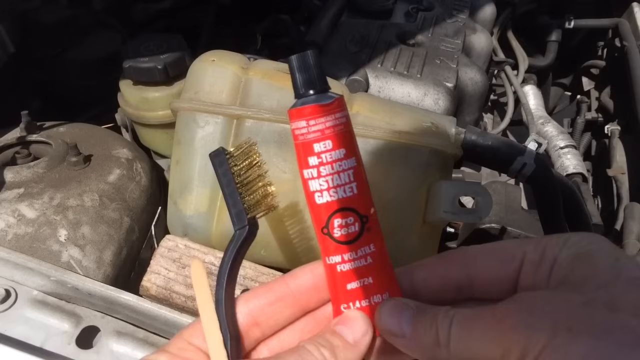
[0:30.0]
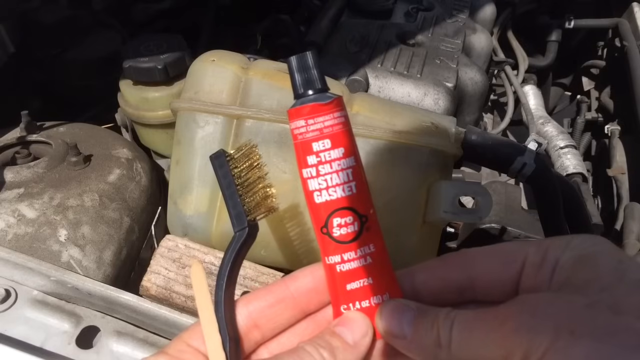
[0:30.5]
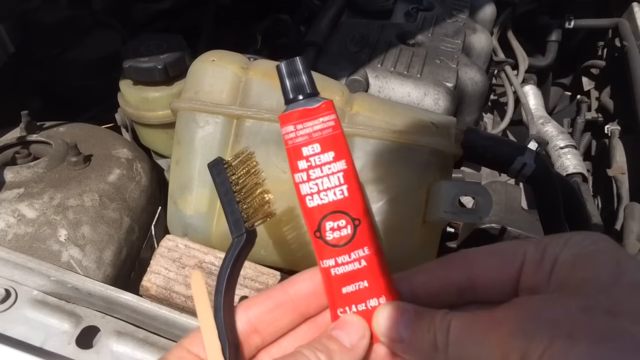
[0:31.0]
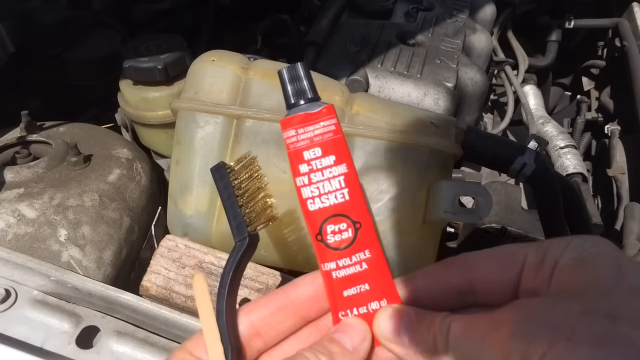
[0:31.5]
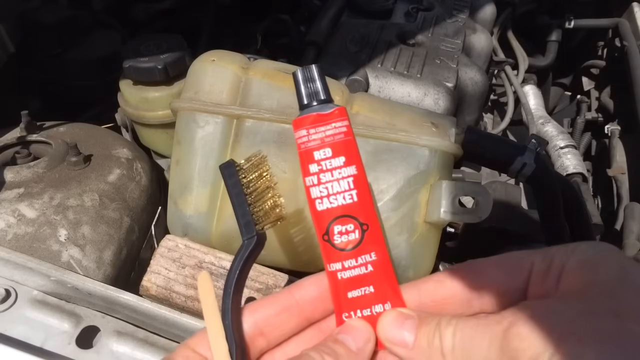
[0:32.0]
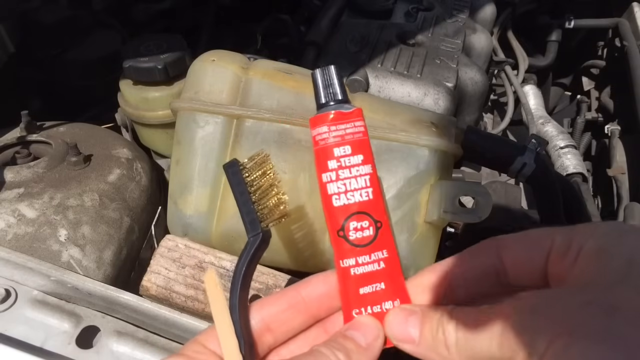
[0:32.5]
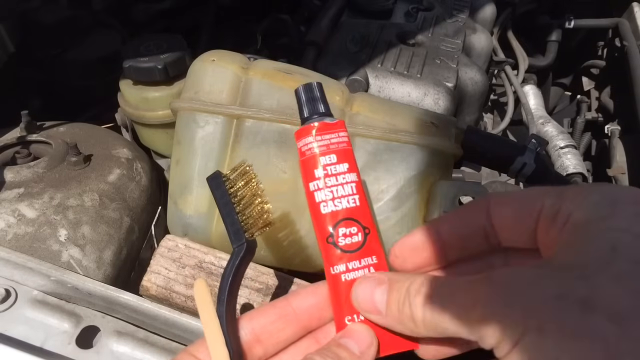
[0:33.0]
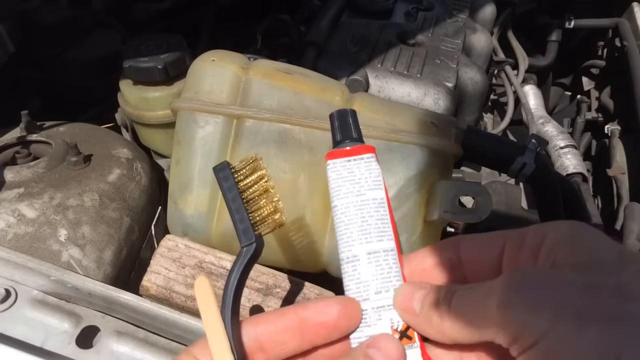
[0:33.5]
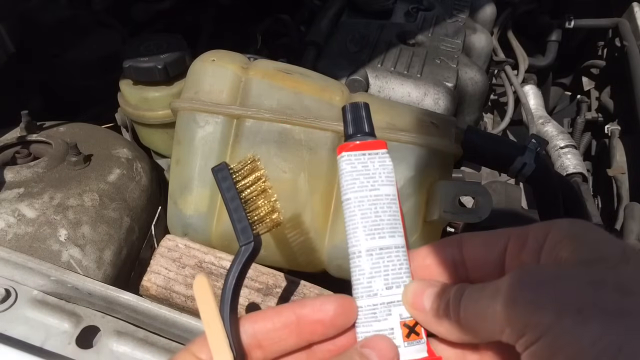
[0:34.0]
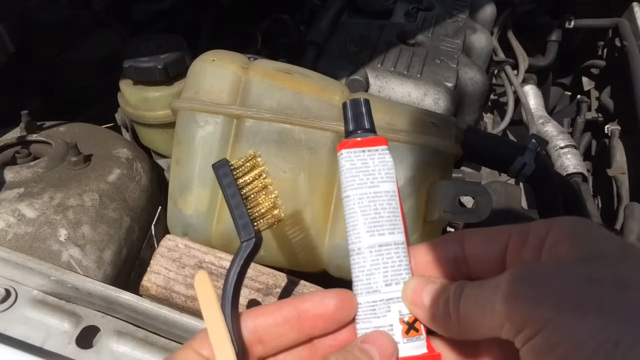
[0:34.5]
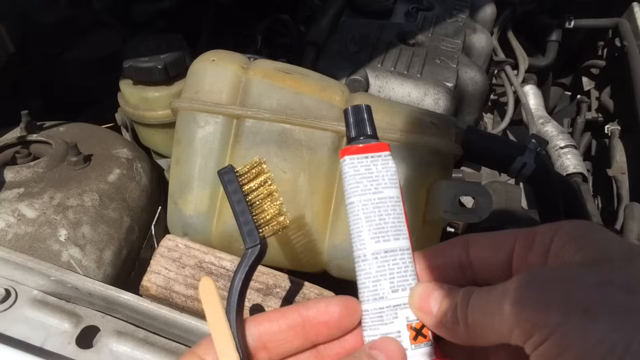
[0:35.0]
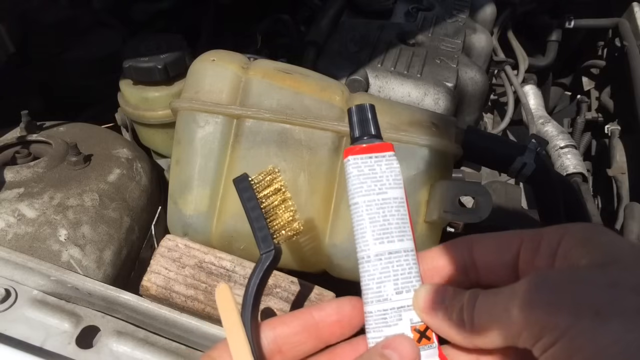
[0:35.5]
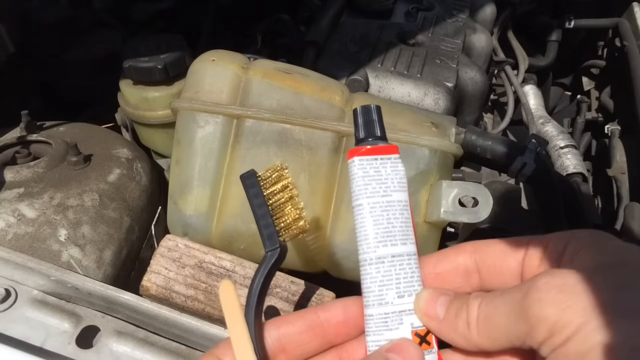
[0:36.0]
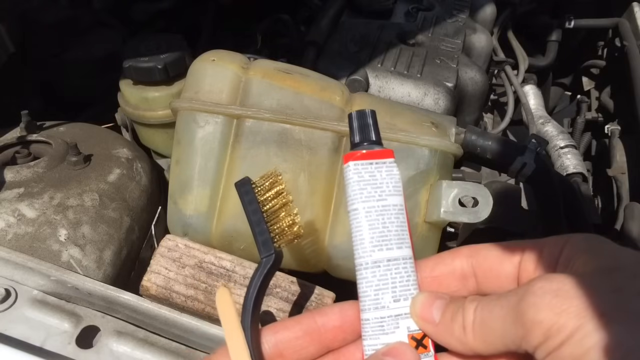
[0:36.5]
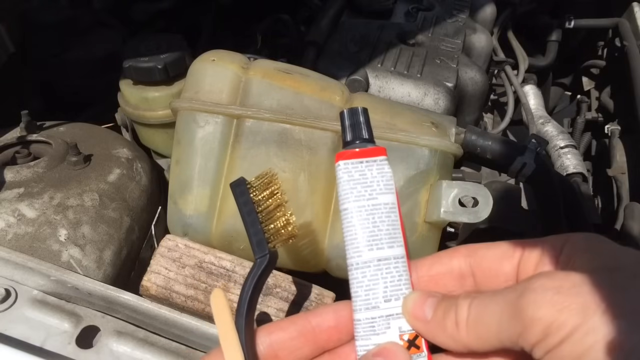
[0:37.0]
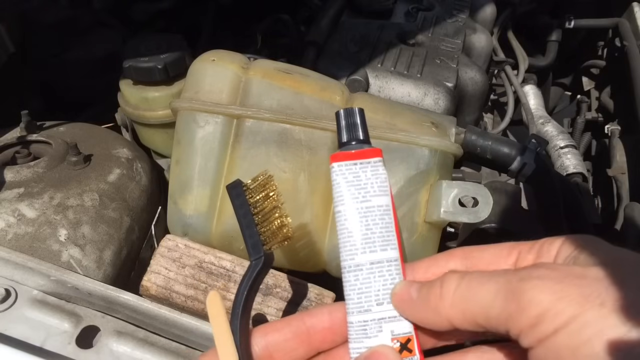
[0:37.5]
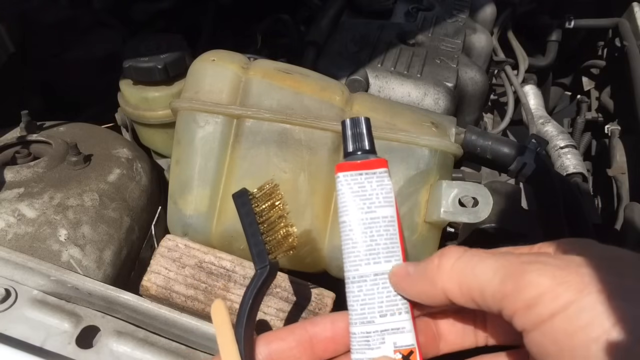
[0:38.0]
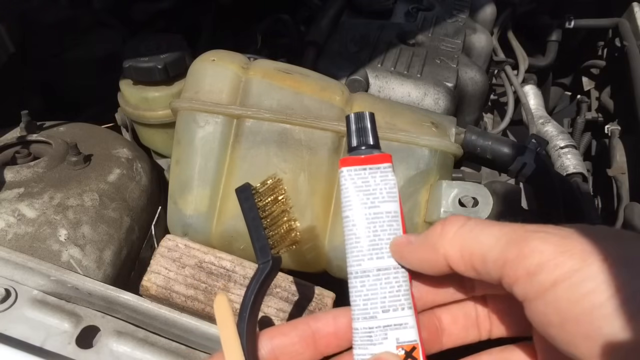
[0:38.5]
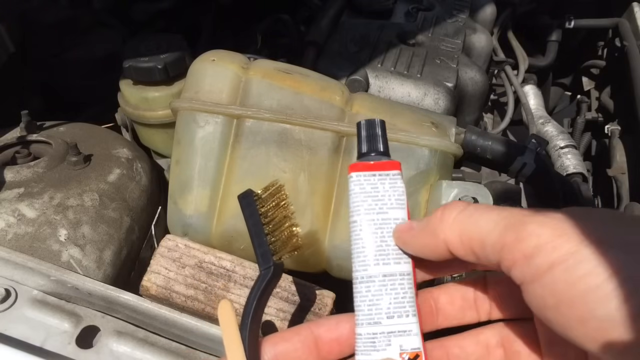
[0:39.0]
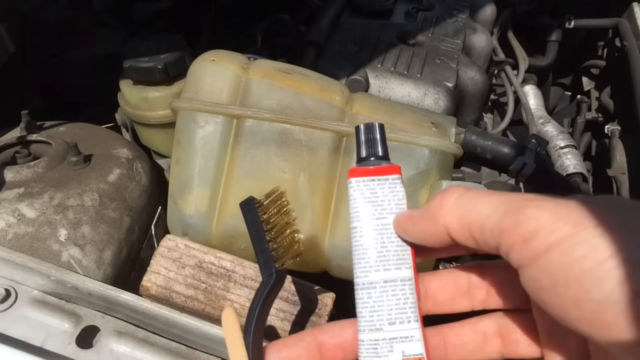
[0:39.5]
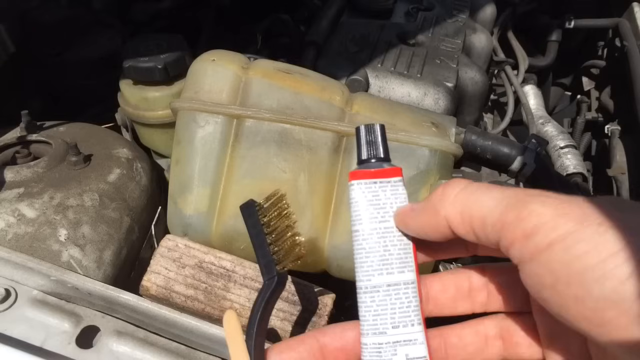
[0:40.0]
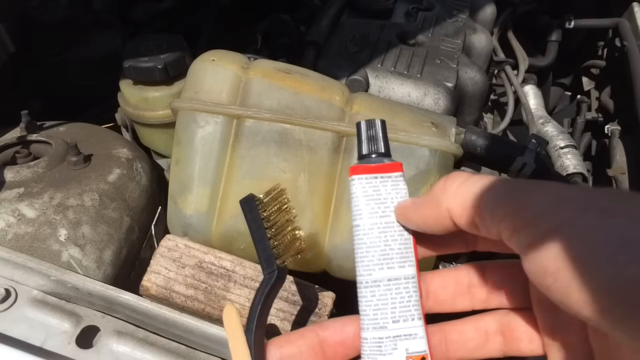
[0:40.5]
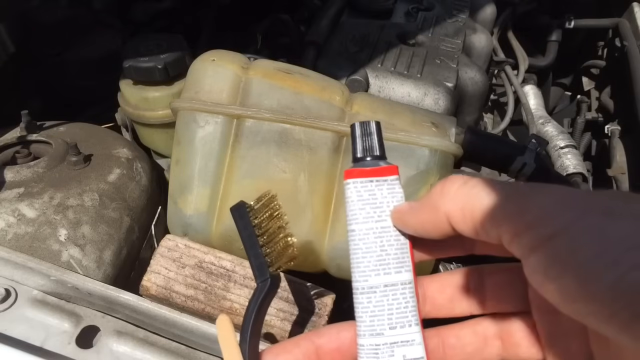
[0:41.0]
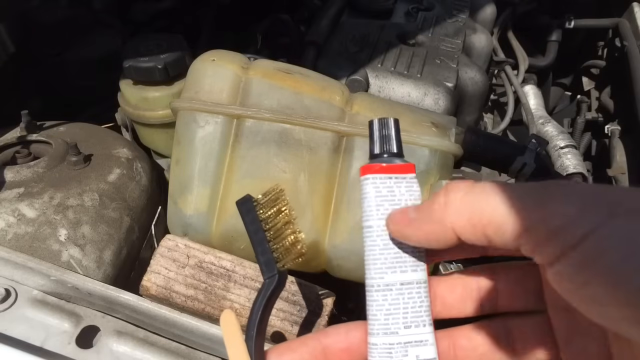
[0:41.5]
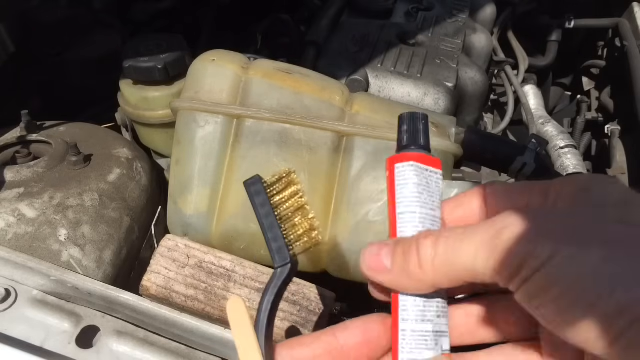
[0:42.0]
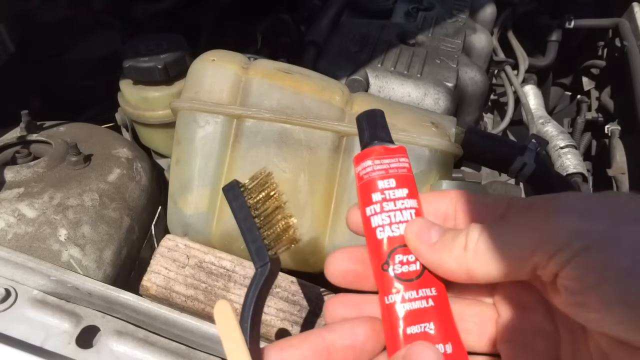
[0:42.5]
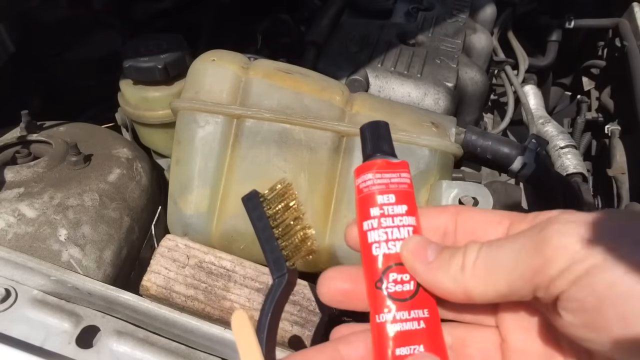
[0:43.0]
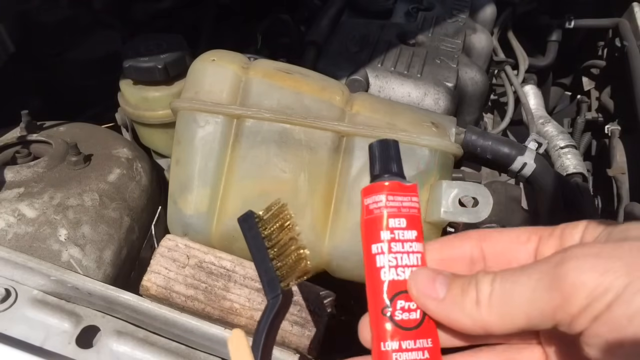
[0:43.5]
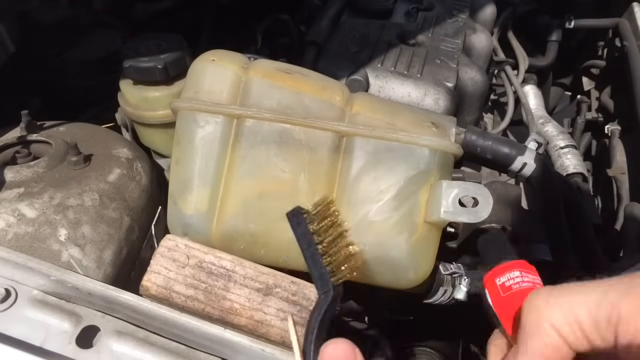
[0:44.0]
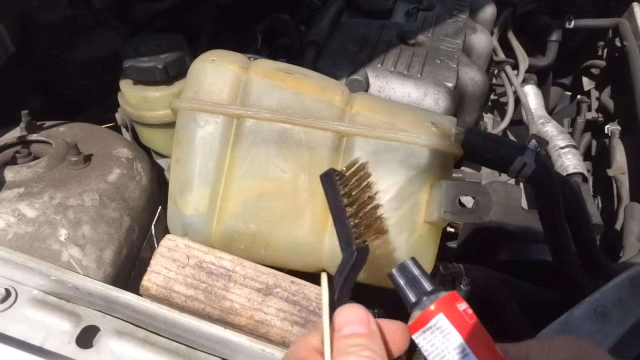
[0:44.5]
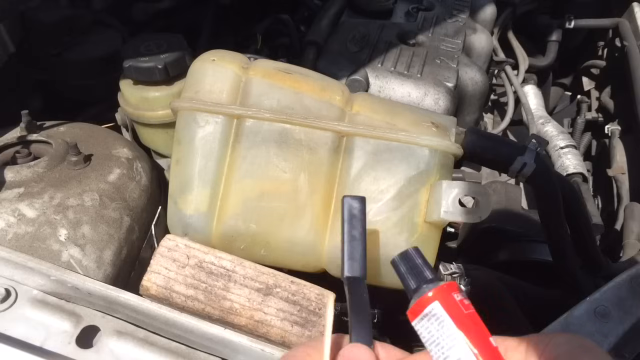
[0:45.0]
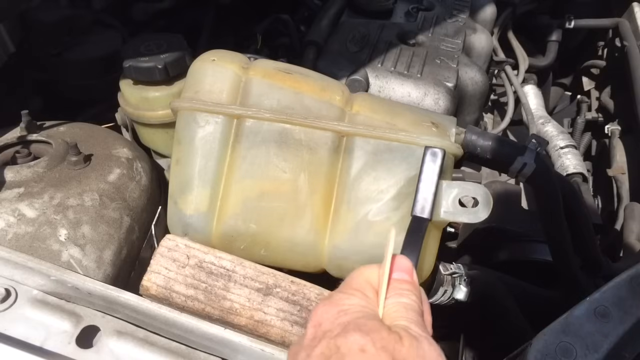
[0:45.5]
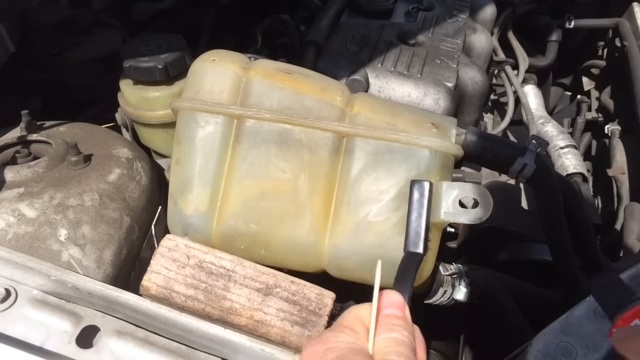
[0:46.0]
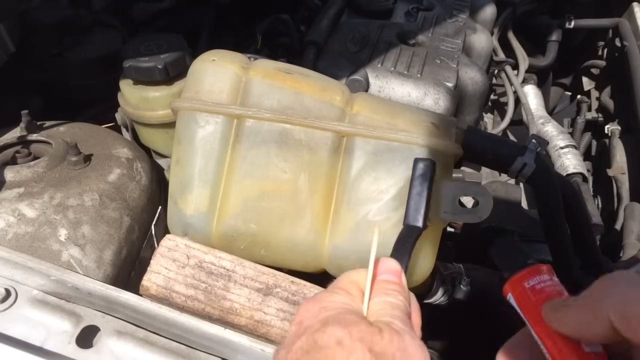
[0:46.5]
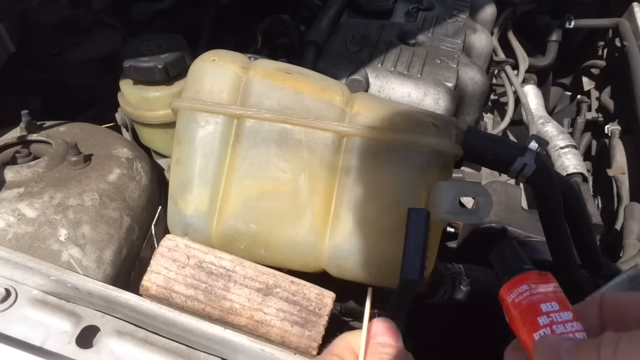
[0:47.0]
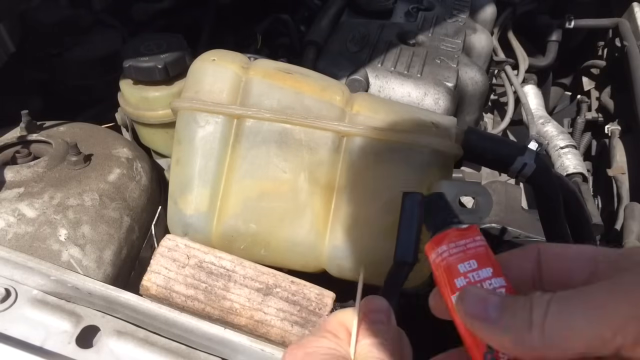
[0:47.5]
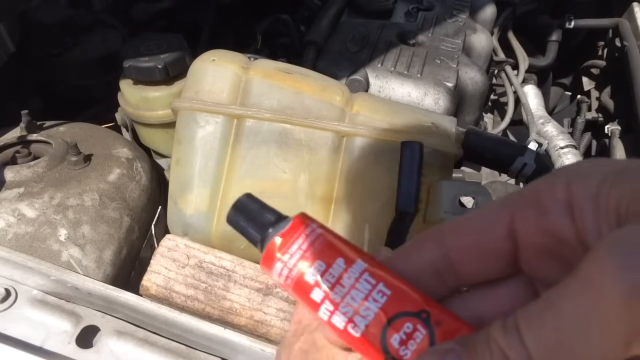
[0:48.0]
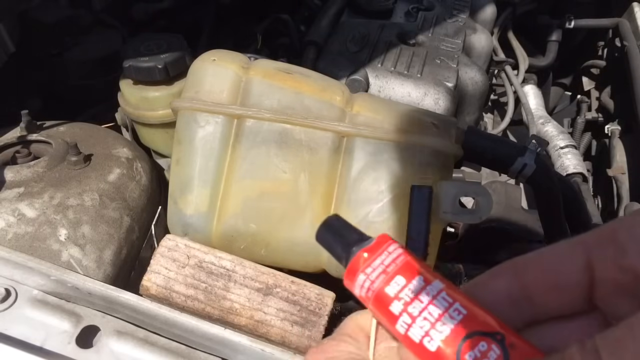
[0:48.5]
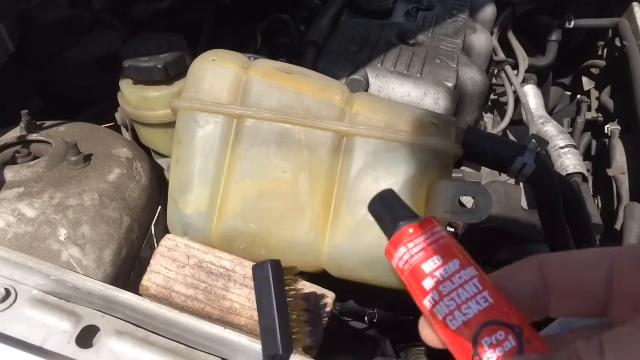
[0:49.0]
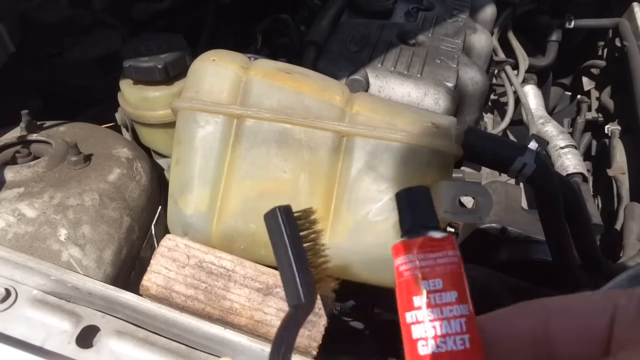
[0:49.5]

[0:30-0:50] A person's hands hold a small tube of a car engine product, using the first two fingers and thumb to grip the bottom of the tube. The tube is red with a black top and has the title "red high temp silicone resistant gasket repair pro seal brand low volatile formula", and the package says it is 1.4 ounces. The left hand also holds a small wire brush slightly larger than a toothbrush. These objects are held in front of the coolant reservoir of a car engine with its hood open, and the sun shines down on the engine, implying it is filmed outside. The person turns the tube over so the back label can be seen, runs a thumb from the bottom to the top and then along a certain part of the words, turns the tube back over, and then uses the brush to rub and clean the coolant reservoir.